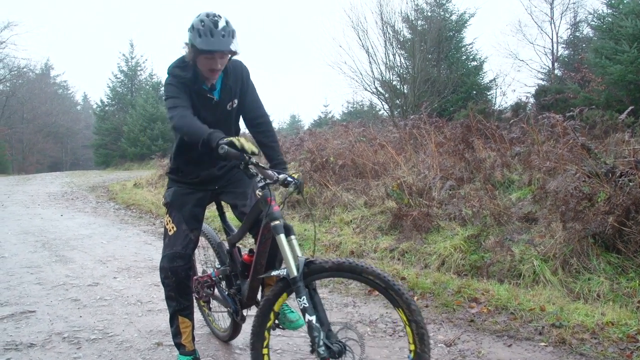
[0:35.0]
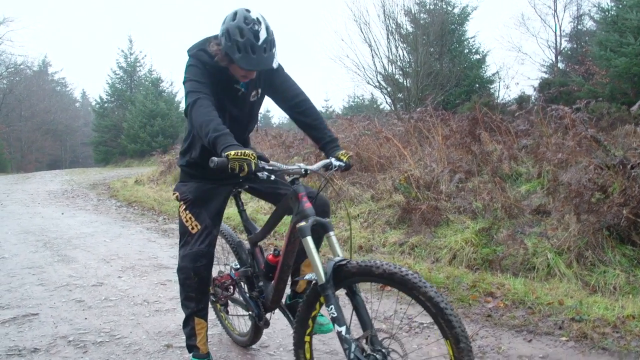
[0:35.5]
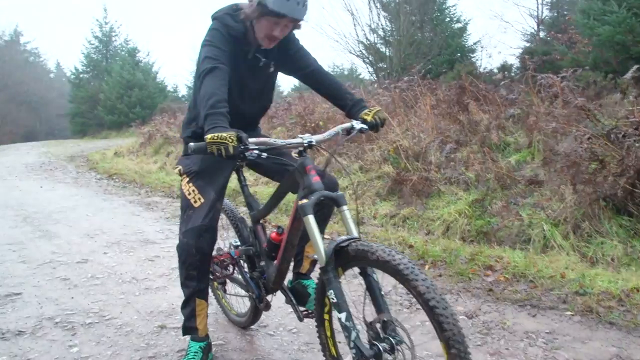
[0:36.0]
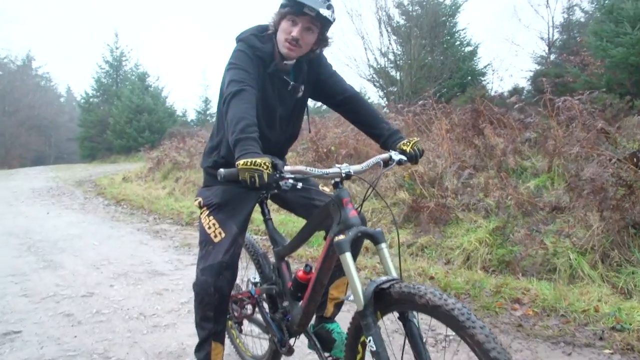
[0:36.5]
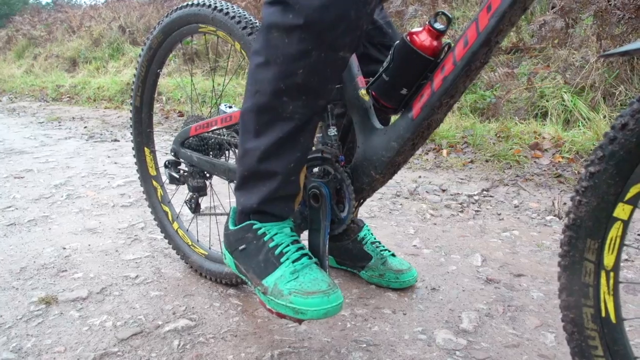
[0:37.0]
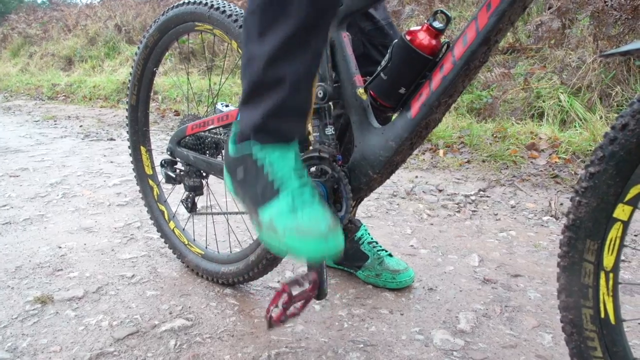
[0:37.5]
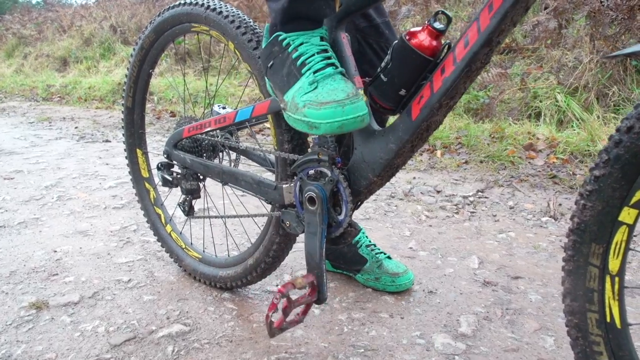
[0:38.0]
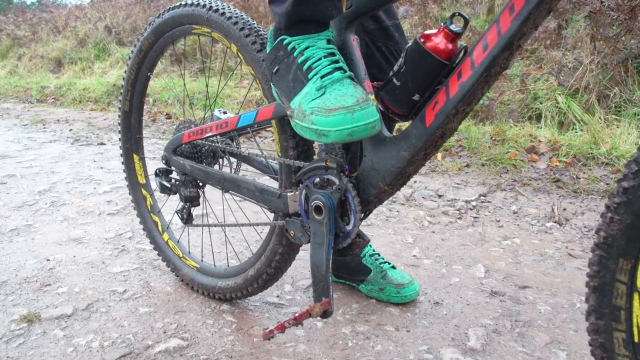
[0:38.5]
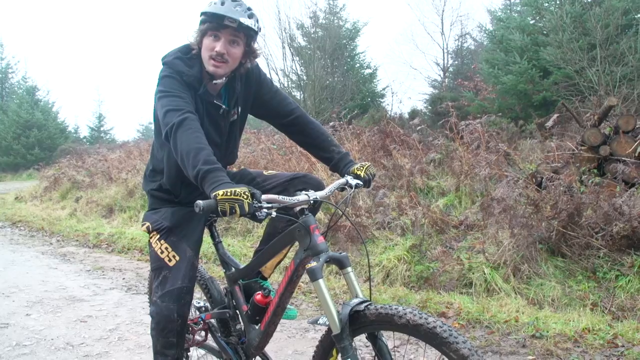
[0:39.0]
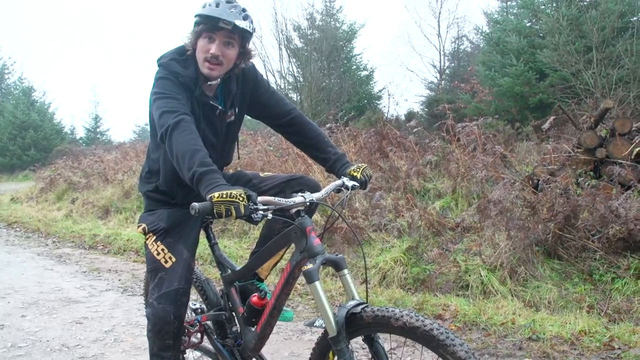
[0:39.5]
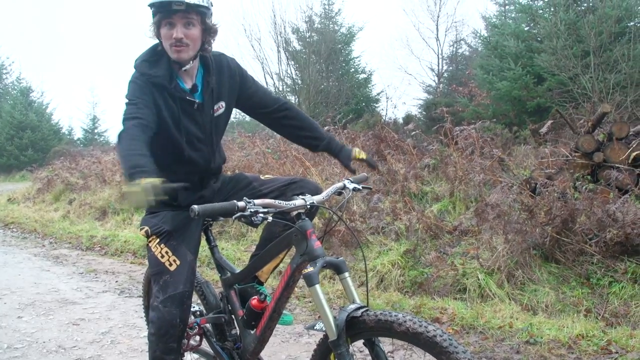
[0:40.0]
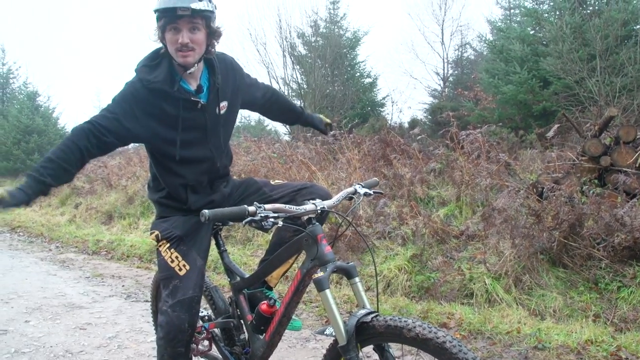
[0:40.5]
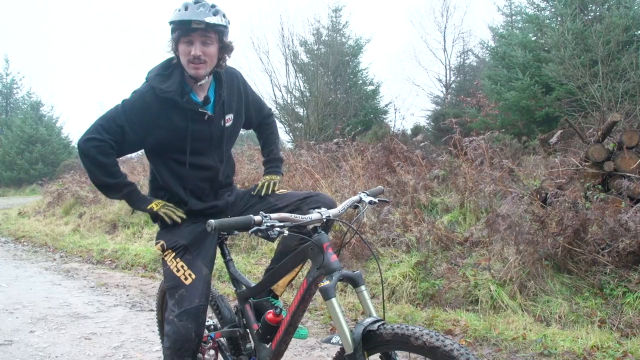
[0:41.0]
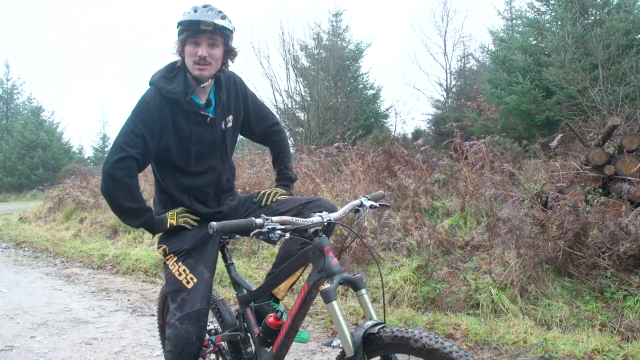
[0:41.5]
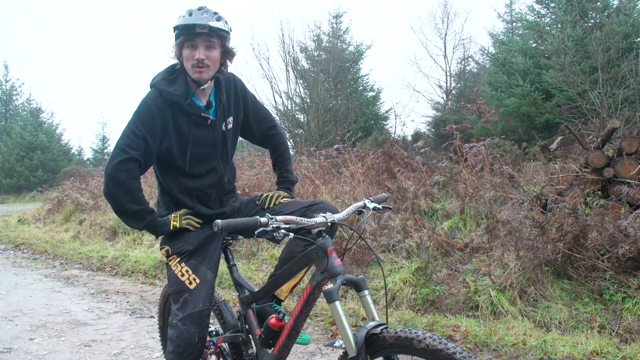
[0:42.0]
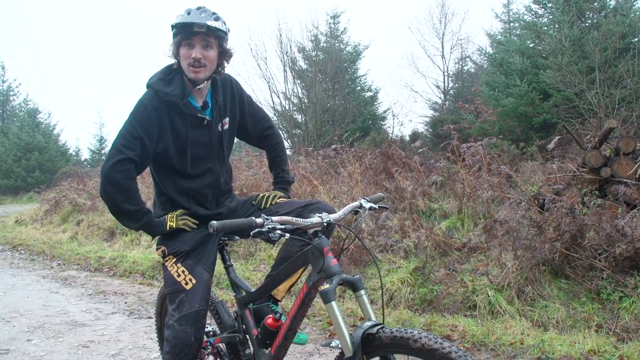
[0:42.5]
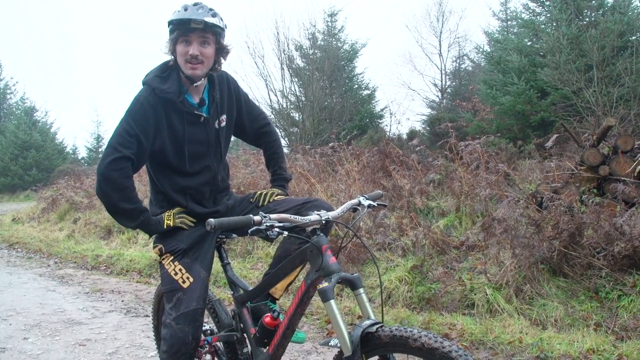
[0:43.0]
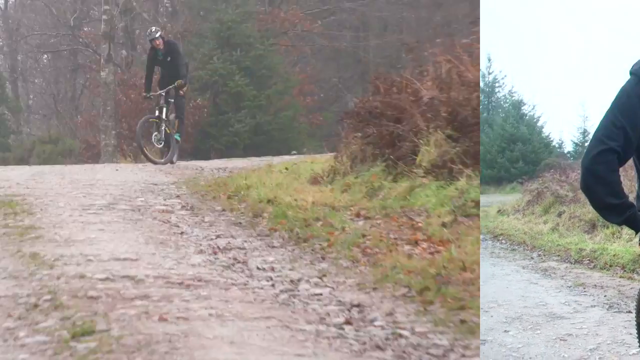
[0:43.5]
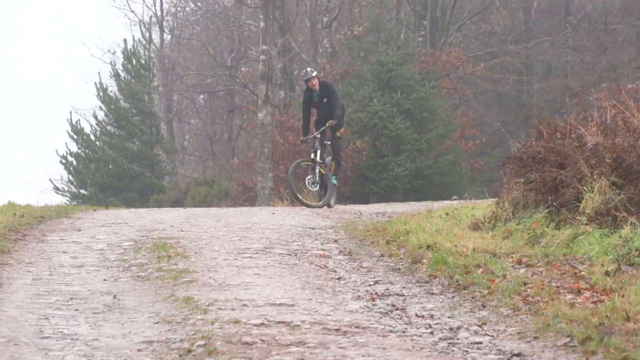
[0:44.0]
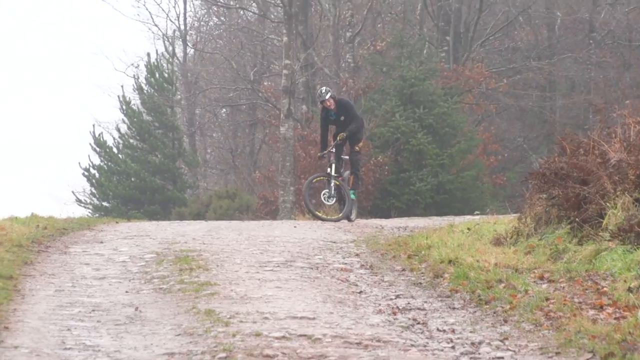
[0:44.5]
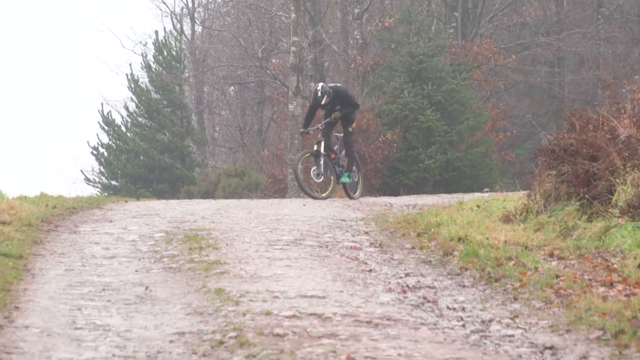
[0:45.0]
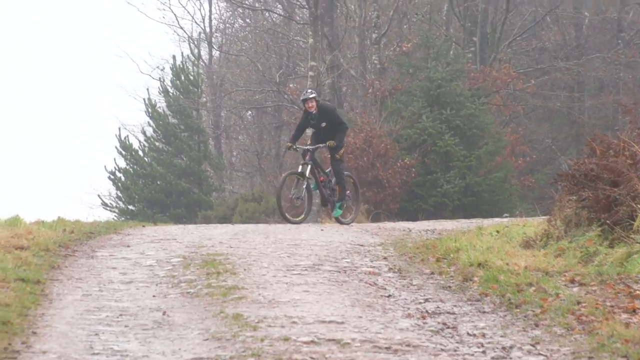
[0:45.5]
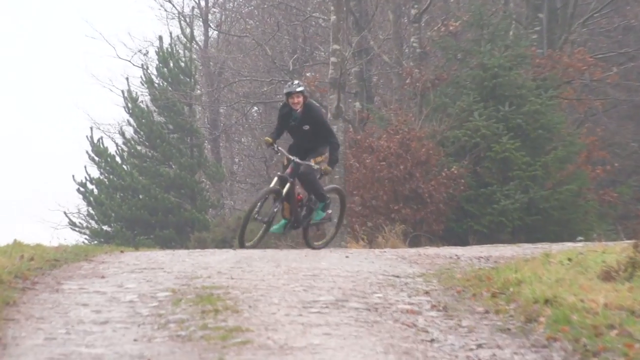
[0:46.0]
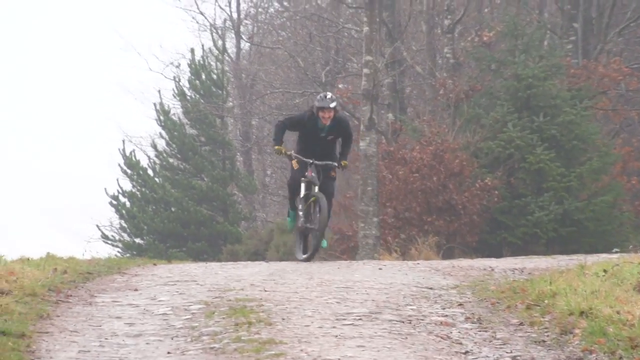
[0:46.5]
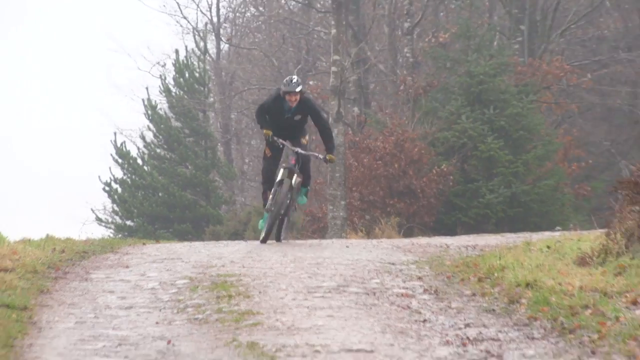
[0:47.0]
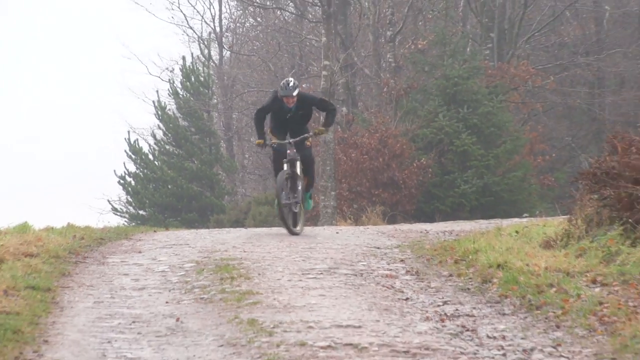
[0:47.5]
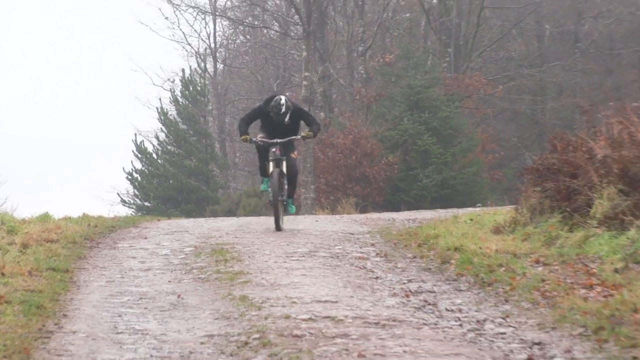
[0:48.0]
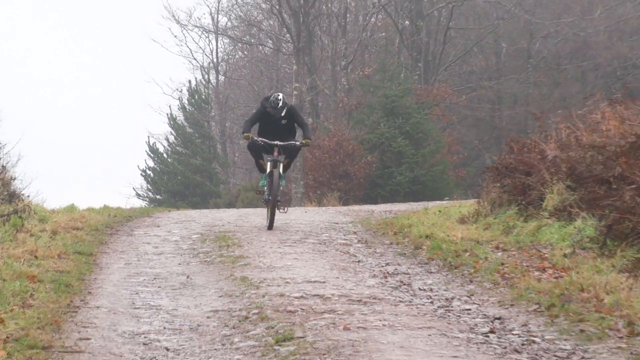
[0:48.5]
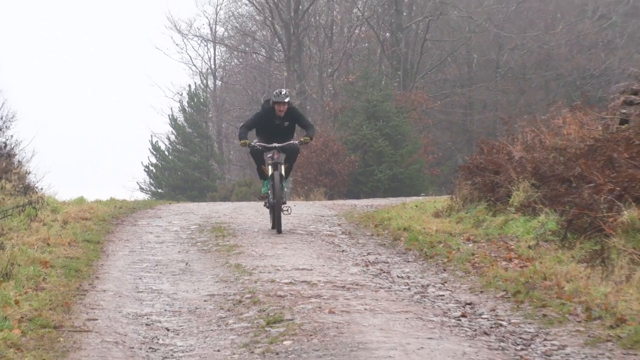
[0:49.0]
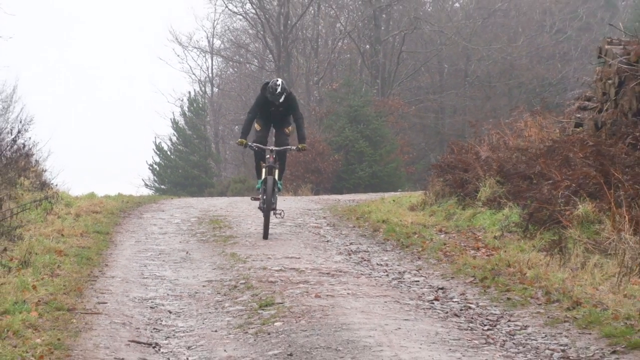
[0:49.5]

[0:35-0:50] A close-up shows a guy on a bike that appears to be black and red. He rides down a hill really fast, then begins to stand up on the bike, putting his feet on top of it as he goes down the hill, his arms kind of spread out. He picks up speed before letting go of the bike as he continues down the hill. The guy looks pretty tall compared to the size of the bike. The bike looks well geared up, with good brakes, and has a red water bottle in the middle.